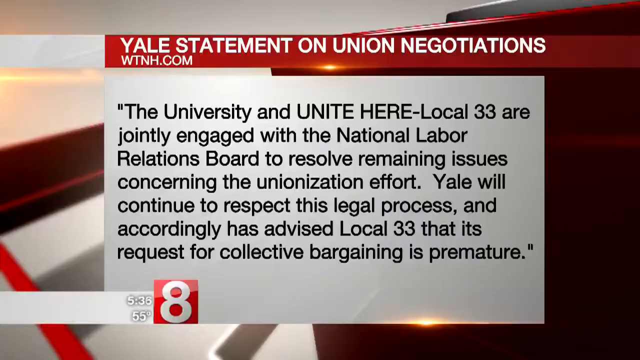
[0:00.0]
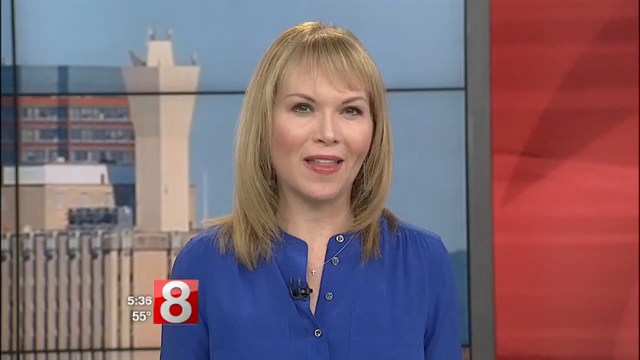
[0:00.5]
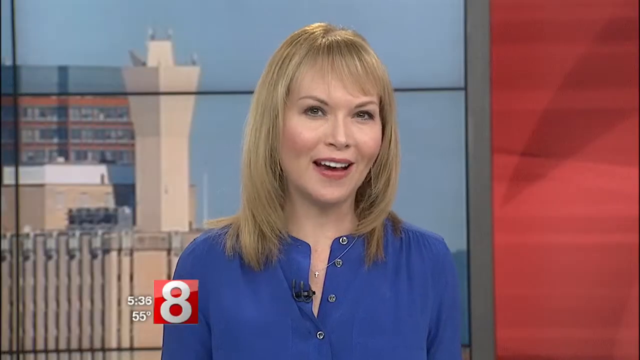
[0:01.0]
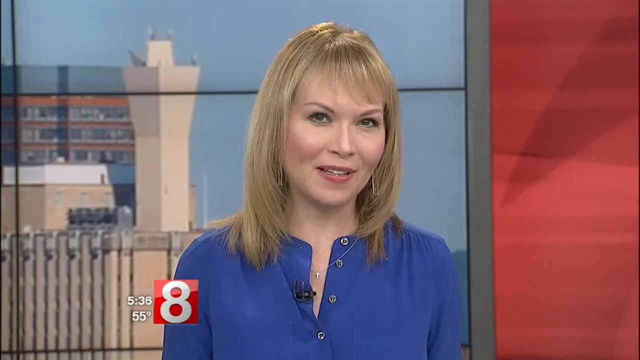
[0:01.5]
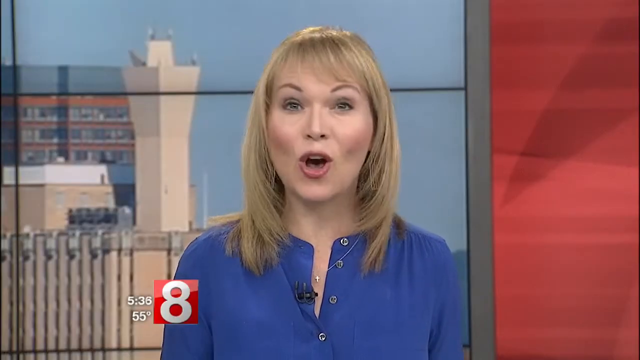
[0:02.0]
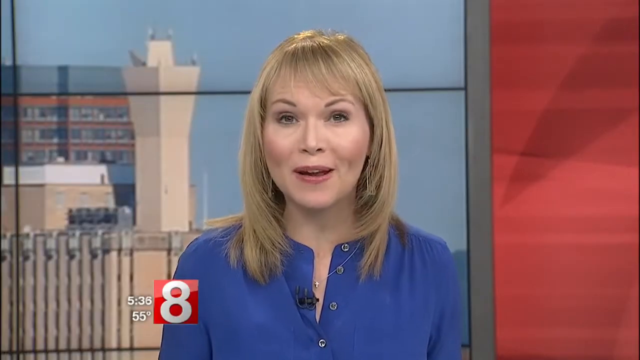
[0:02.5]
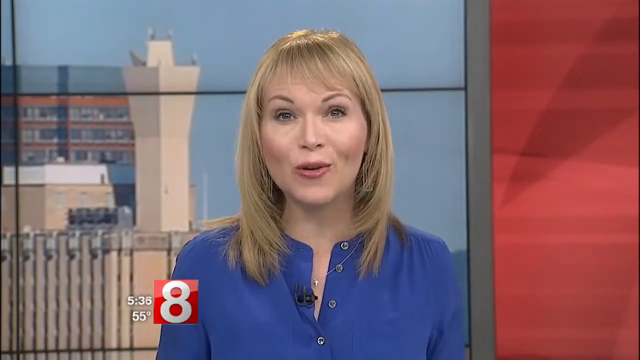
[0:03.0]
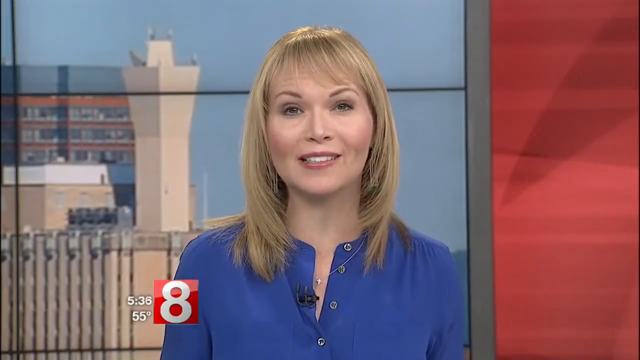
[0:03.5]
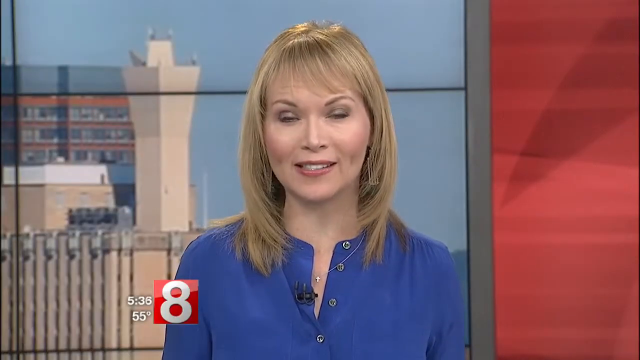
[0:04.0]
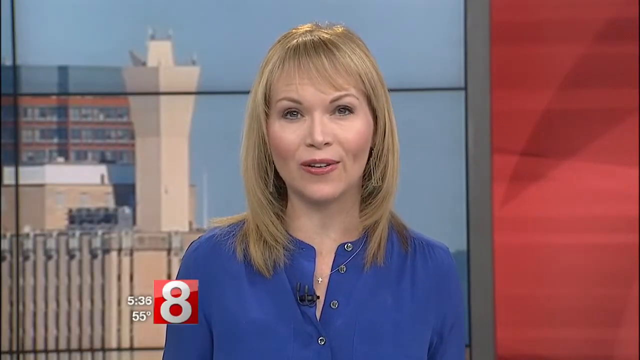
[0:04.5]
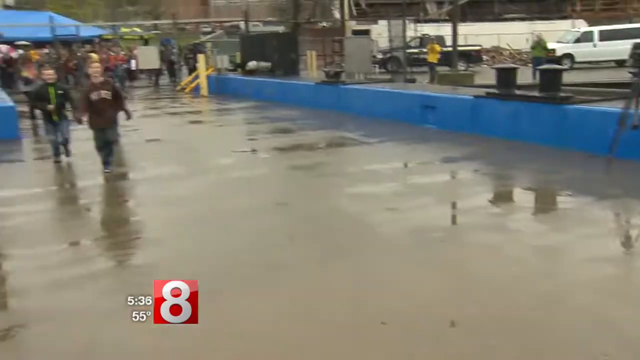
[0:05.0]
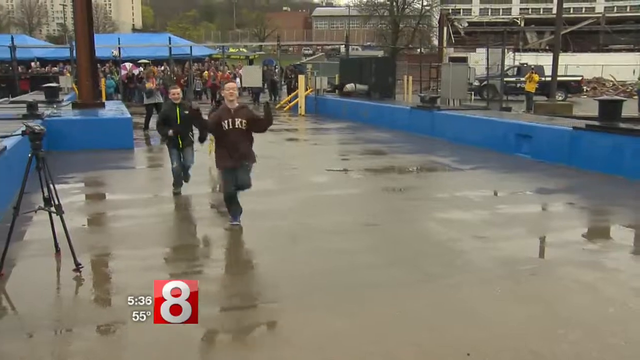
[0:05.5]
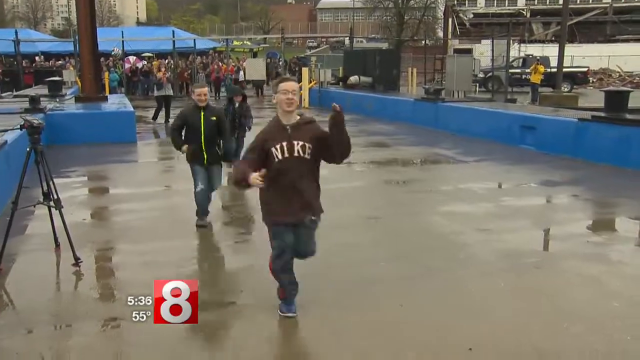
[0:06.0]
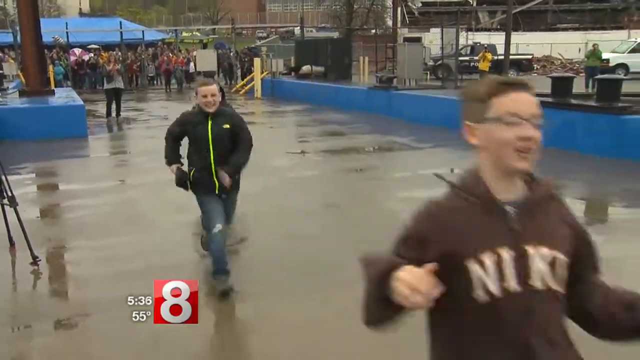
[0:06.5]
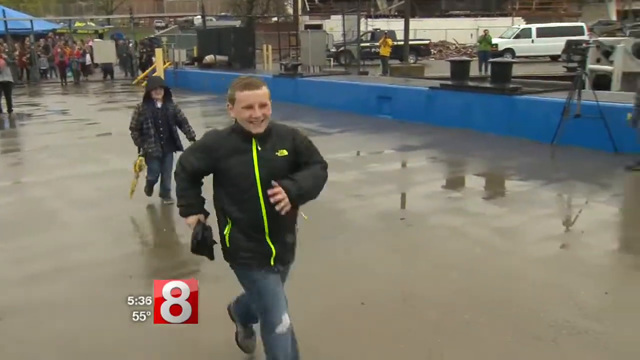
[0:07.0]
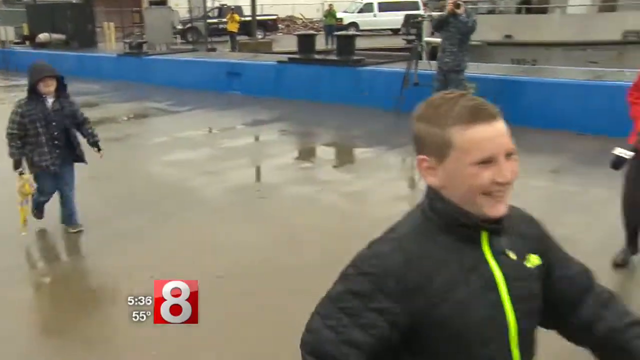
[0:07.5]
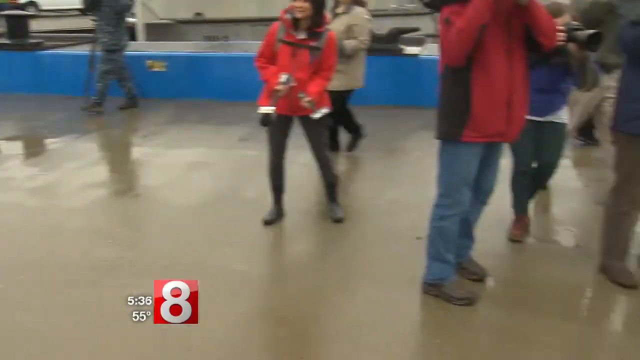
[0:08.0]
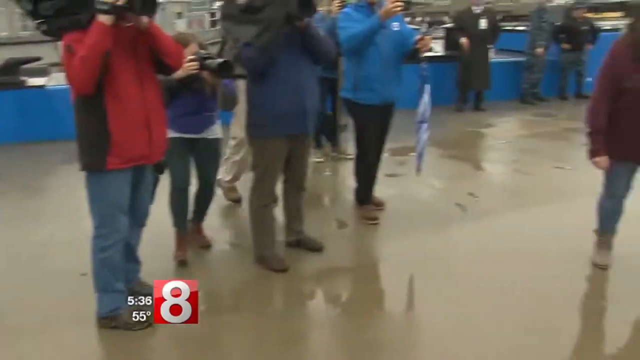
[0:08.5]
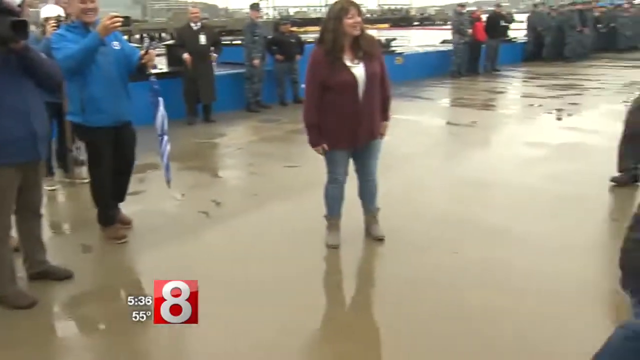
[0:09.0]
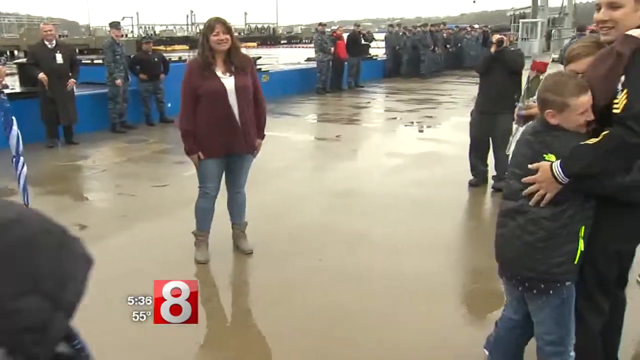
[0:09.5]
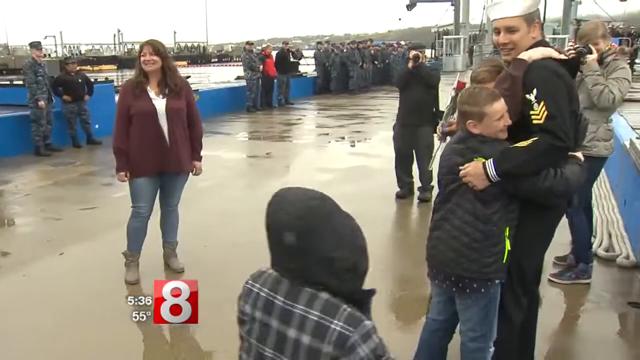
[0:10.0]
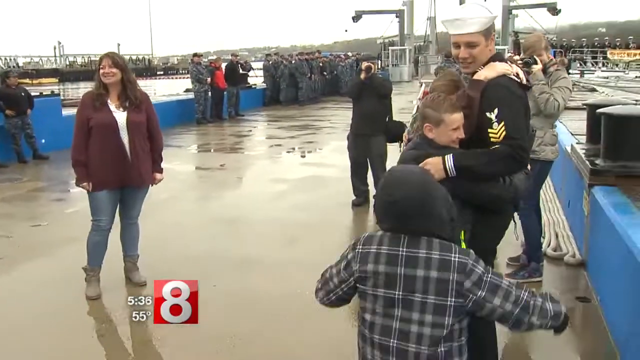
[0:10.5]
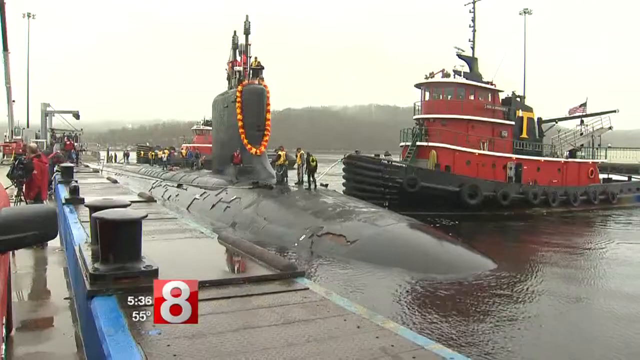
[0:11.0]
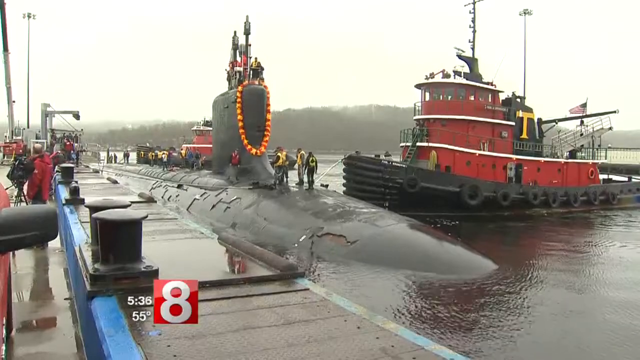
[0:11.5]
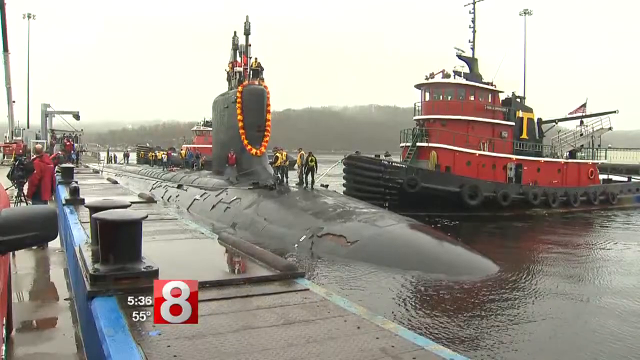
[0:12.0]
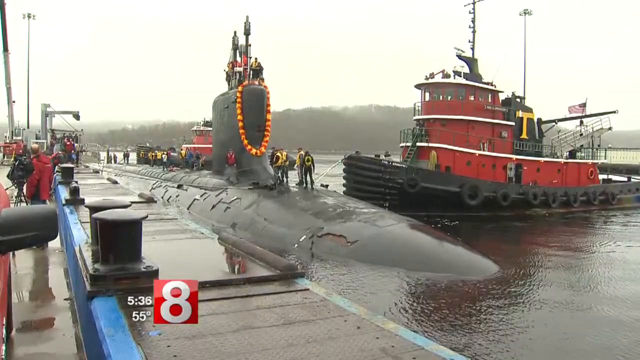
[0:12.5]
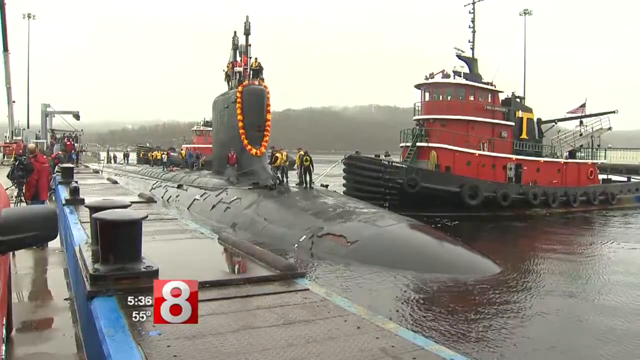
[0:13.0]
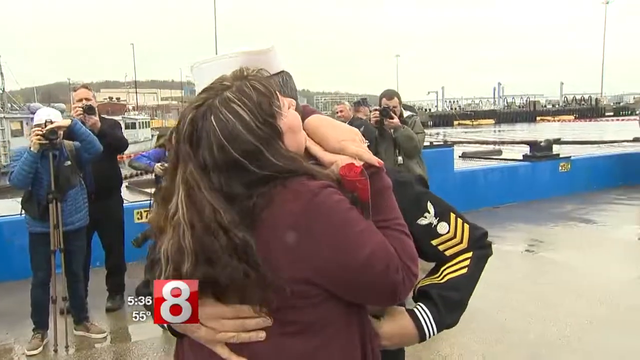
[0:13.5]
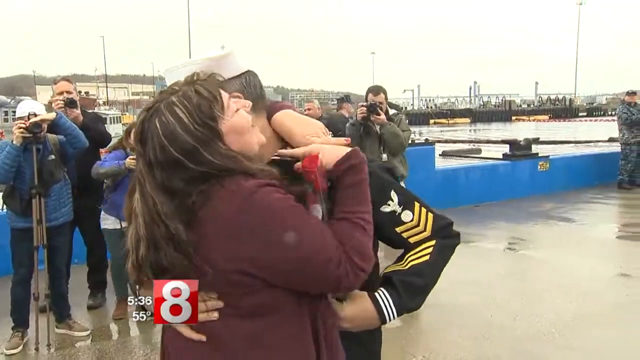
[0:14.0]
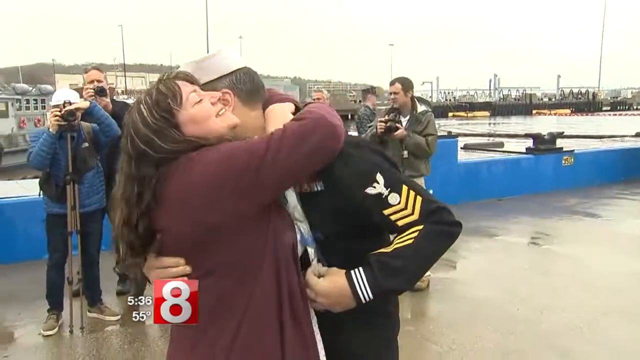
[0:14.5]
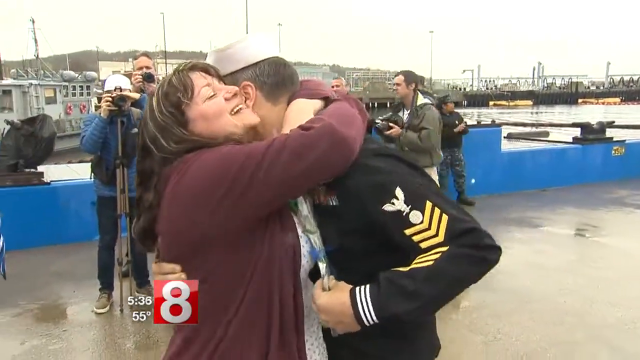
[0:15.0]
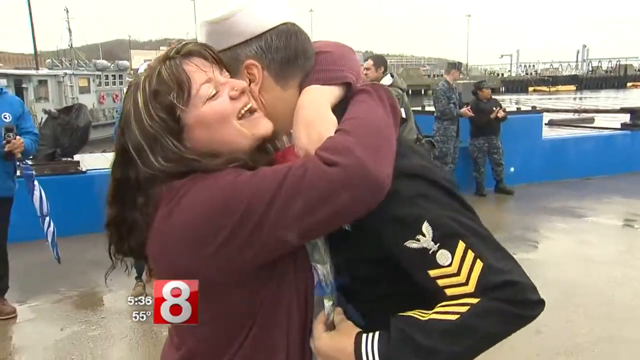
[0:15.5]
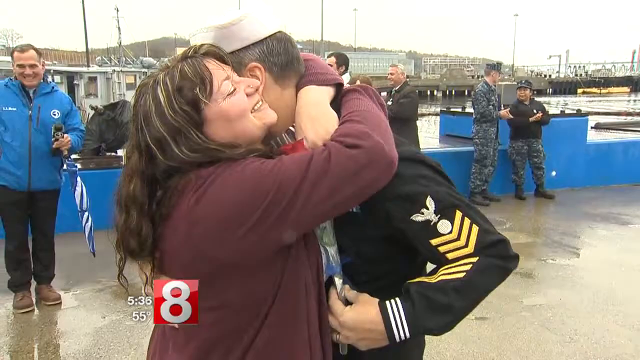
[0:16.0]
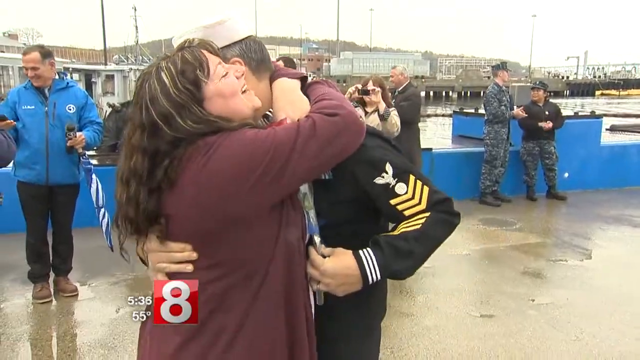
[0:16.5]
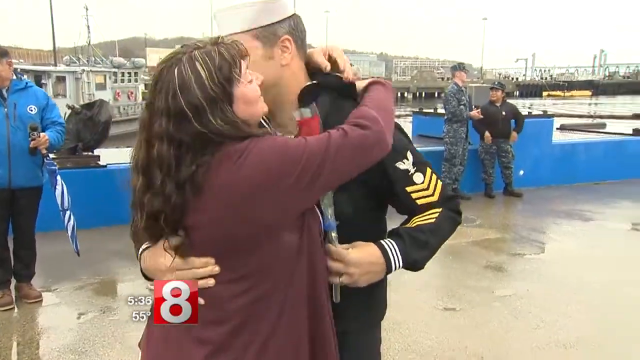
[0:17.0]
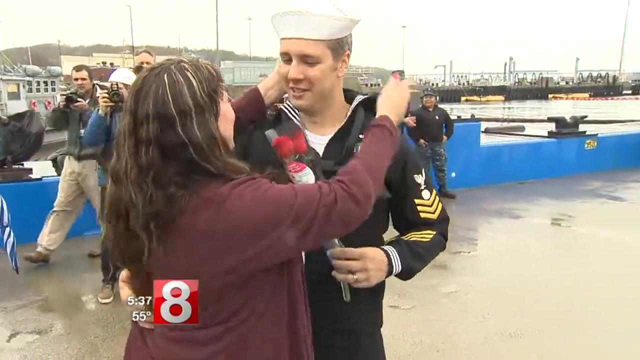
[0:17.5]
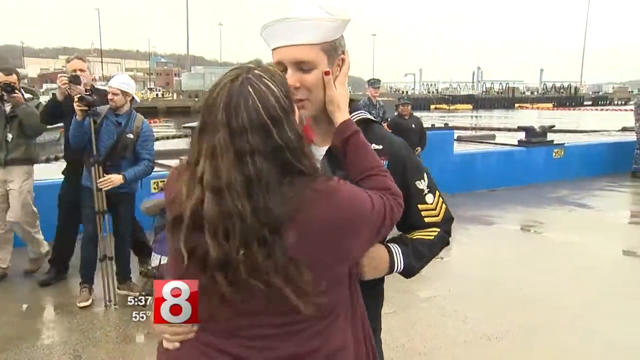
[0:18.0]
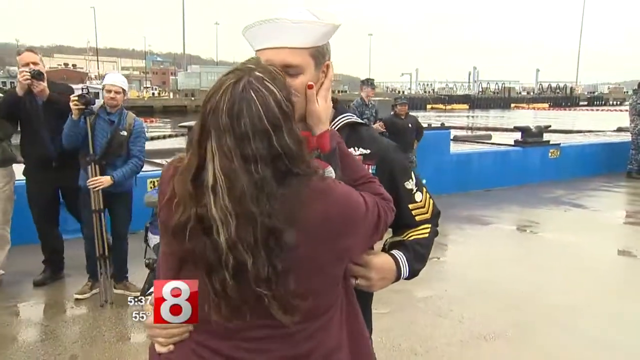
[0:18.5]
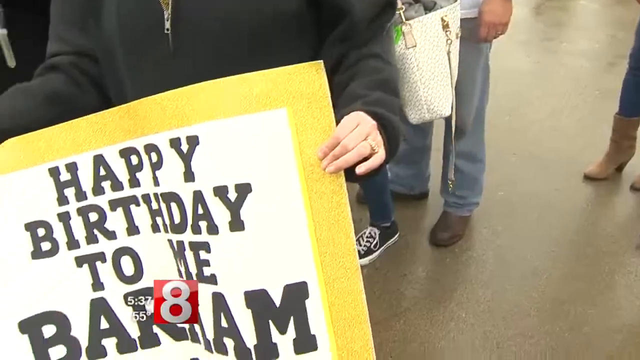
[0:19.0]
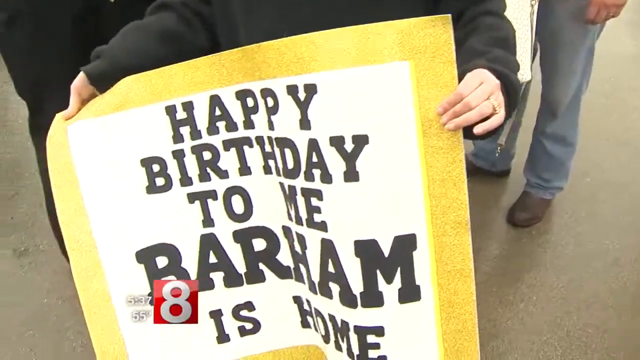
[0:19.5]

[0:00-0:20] The video opens with a text graphic whose header, in white lettering on a red banner, reads "Yale Statement on Union Negotiations, WTNH.com." Below, in black text on a white background, it reads: "the University and Unite Here, Local 33, are jointly engaged with the National Labor Relations Board to resolve remaining issues concerning the unionization effort. Yale will continue to respect this legal process and accordingly has advised Local 33 that its request for collective bargaining is premature." The video cuts to a news anchor, a blonde woman, maybe in her early 40s, wearing a blue button-down blouse, who continues speaking. Next, three children run forward to see their father, who is apparently a submariner in the navy returning from deployment, and they are very happy to see him. A shot follows of a submarine with a Hawaiian lei on the con tower. Next to the submarine, perpendicular to it, is an all-red tugboat with a yellow letter T on the smokestack area. The submarine is docked parallel to the dock. There appear to be five sailors on the front portion, on top of the con and in front of it; more sailors are toward the aft portion of the boat, but how many is too difficult to distinguish. A middle-aged or late-30s woman then hugs a sailor who, by his insignia, is of high rank, while camera people in the background film the reunion. She gives him a long hug and then a kiss.